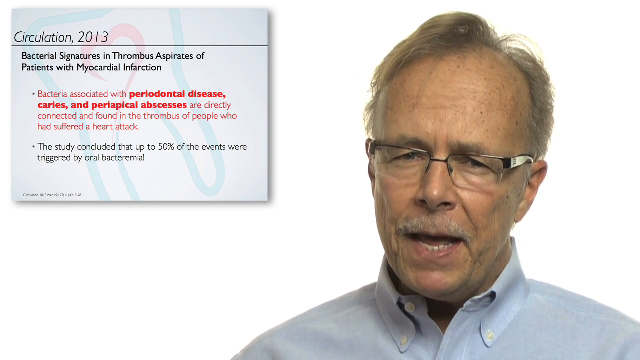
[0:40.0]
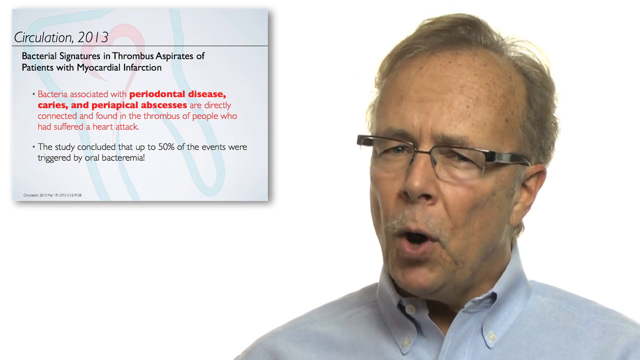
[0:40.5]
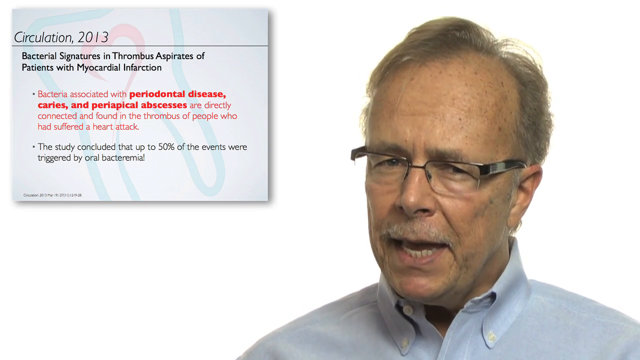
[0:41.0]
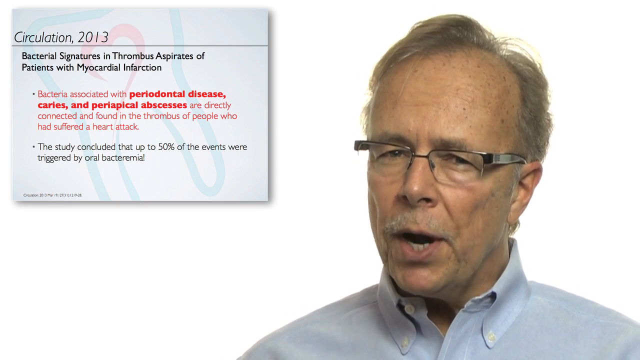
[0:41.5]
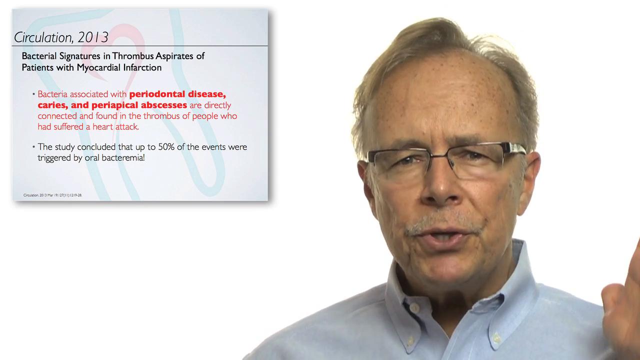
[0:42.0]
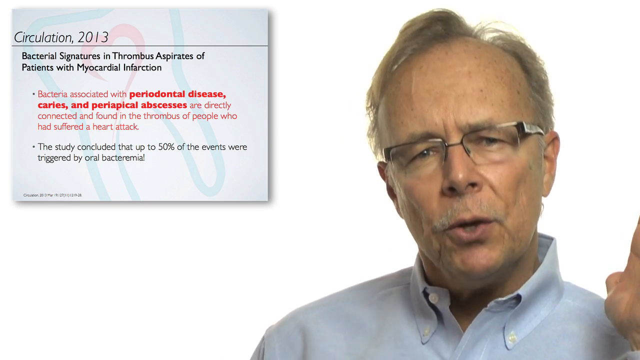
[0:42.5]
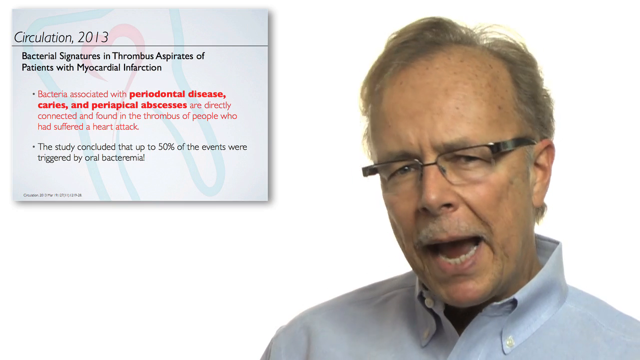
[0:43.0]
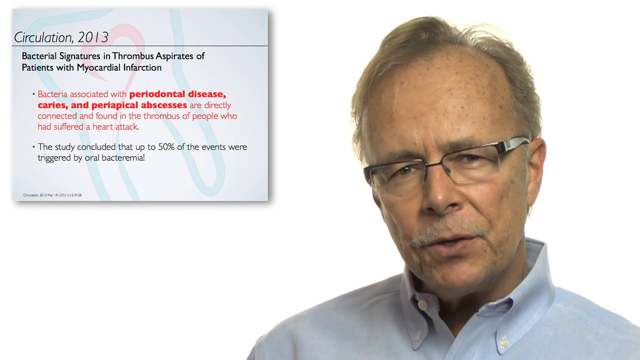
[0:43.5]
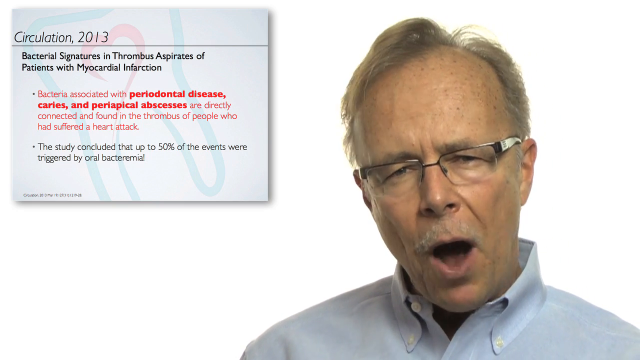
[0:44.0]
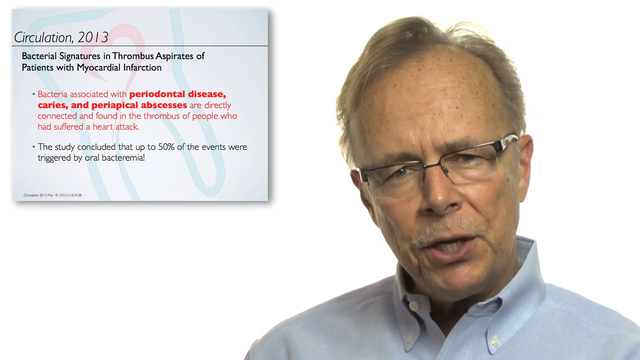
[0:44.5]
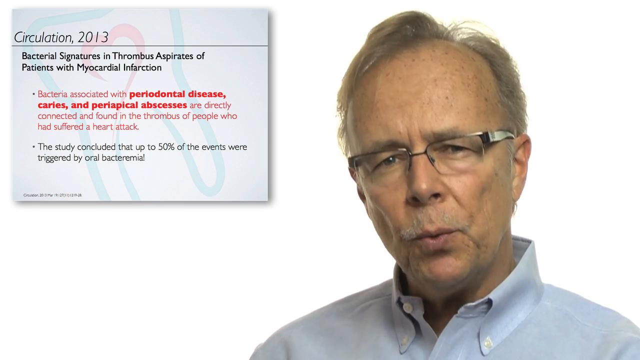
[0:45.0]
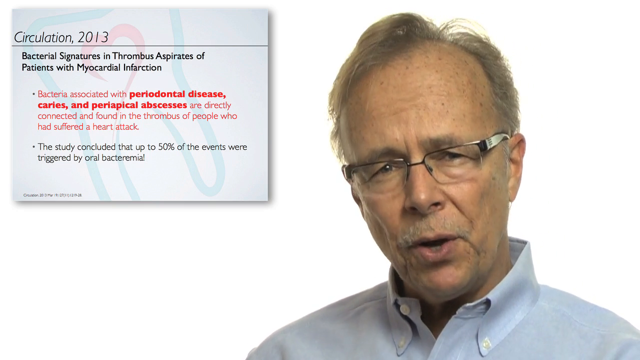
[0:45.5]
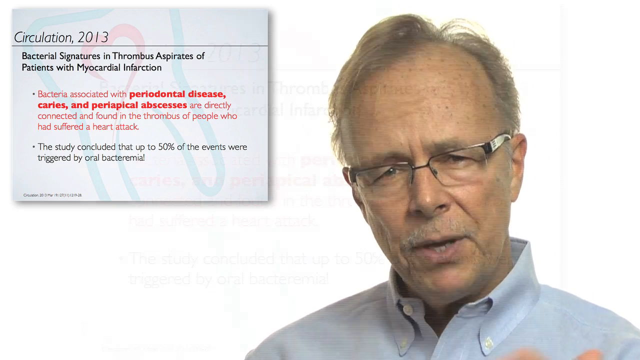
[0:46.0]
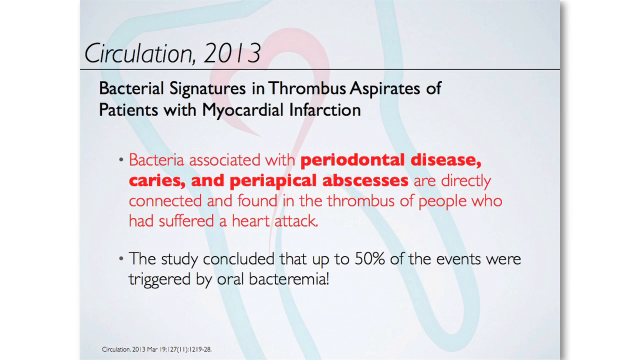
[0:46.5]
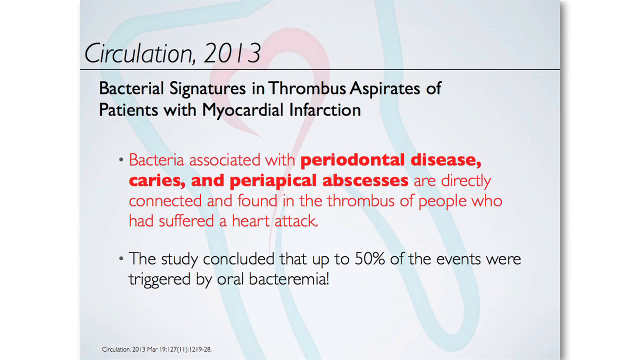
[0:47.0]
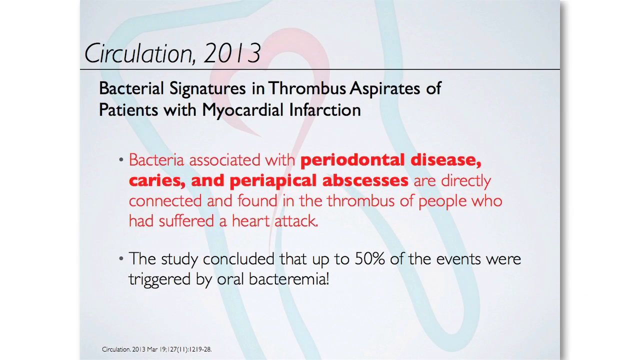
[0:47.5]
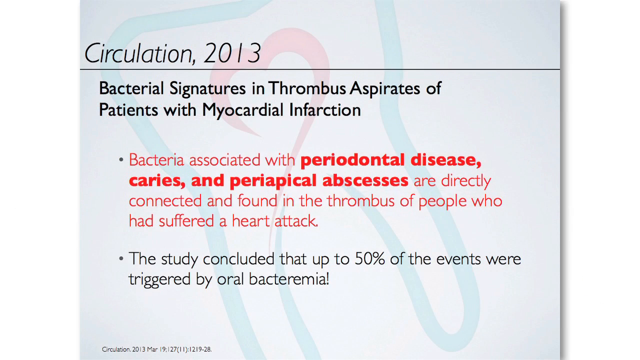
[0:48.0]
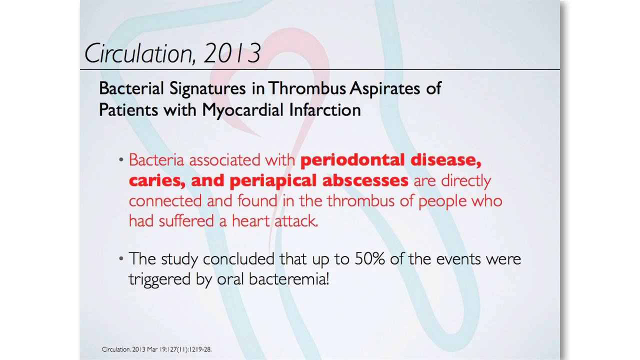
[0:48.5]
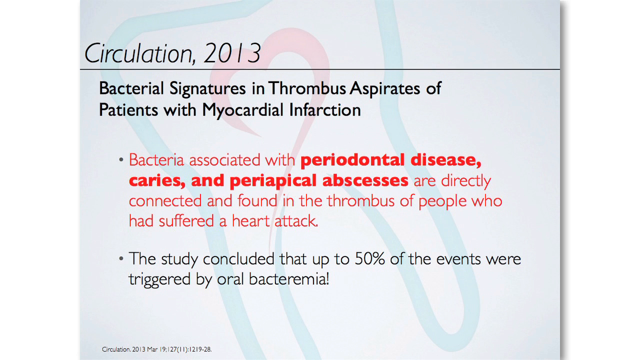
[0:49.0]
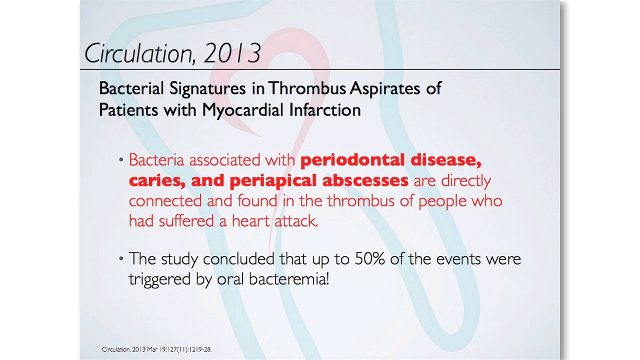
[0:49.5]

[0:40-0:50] The man continues to talk, looking very serious and focused on what he is saying, and raises his hands a little higher. He has a thin gray mustache and a few pieces of hair that kind of stick up in the air. Eventually the camera zooms into the slide, making the source at the bottom readable: "Circulation 2013 mar 19," followed by a list of numbers, apparently page numbers, the first of which is 127.